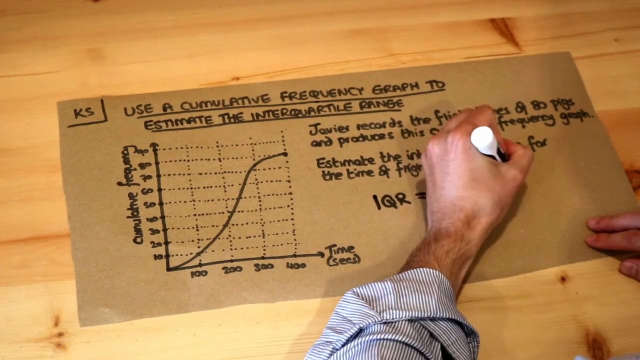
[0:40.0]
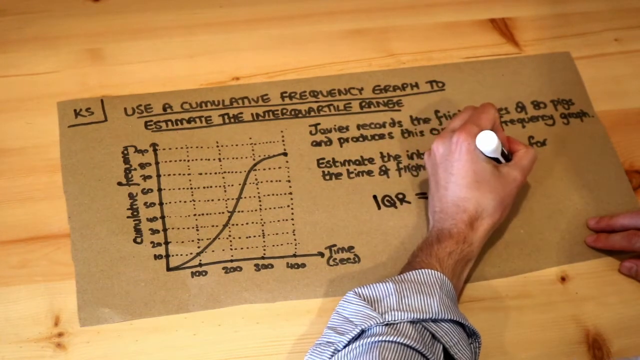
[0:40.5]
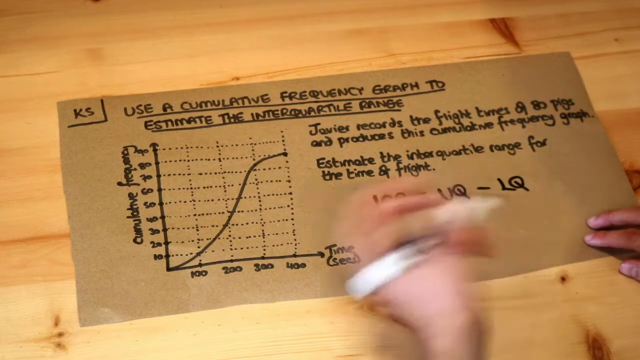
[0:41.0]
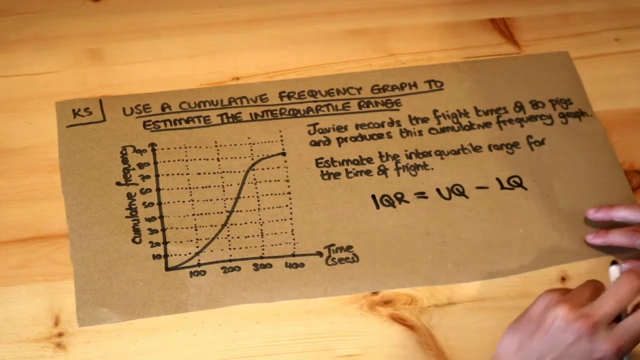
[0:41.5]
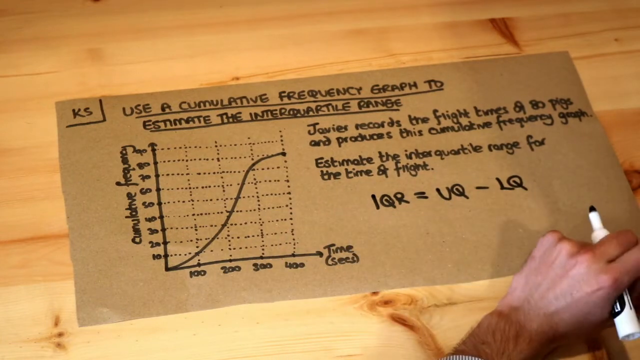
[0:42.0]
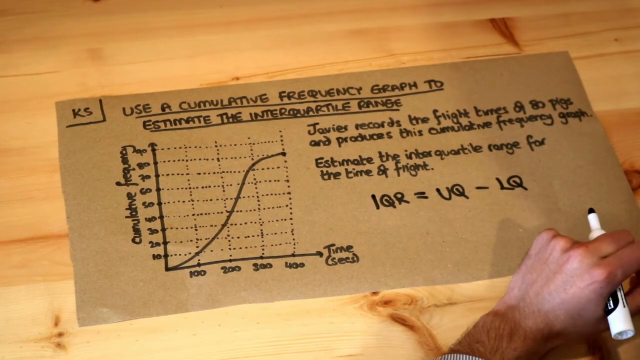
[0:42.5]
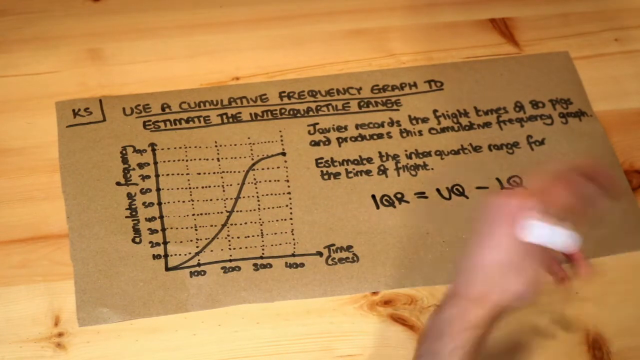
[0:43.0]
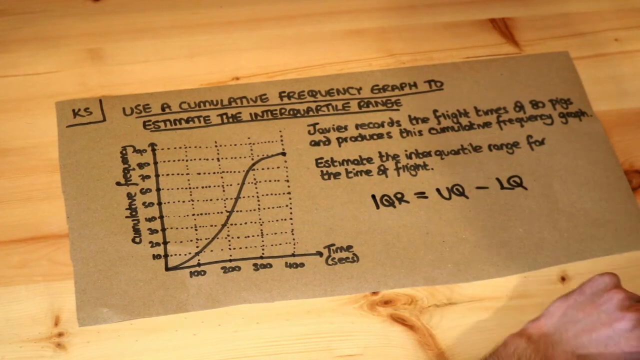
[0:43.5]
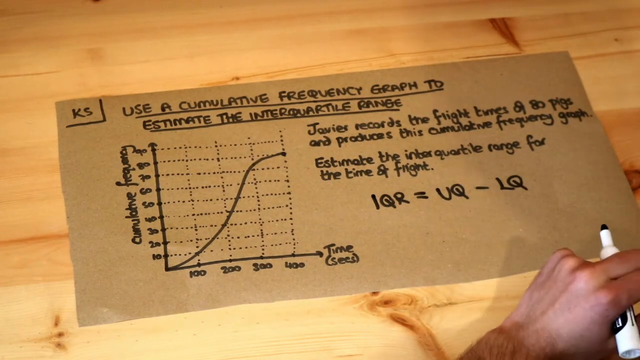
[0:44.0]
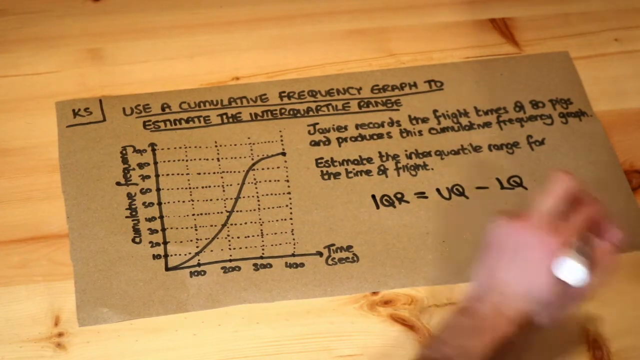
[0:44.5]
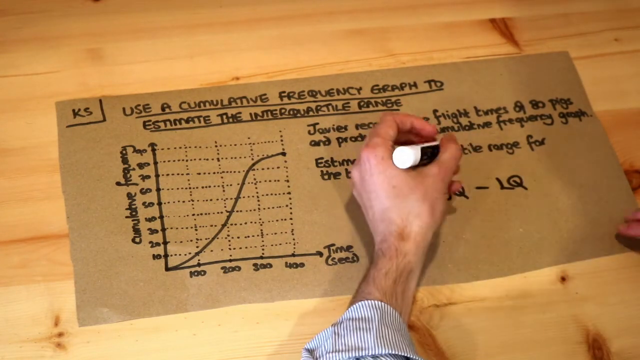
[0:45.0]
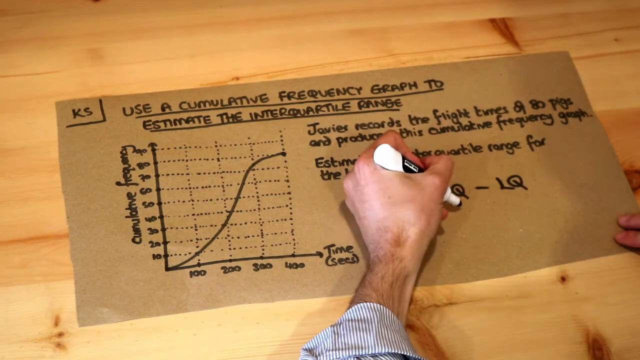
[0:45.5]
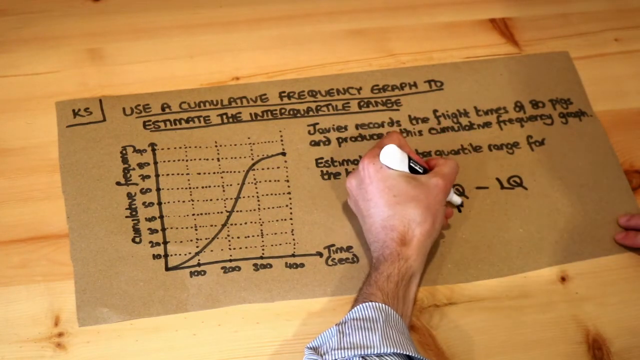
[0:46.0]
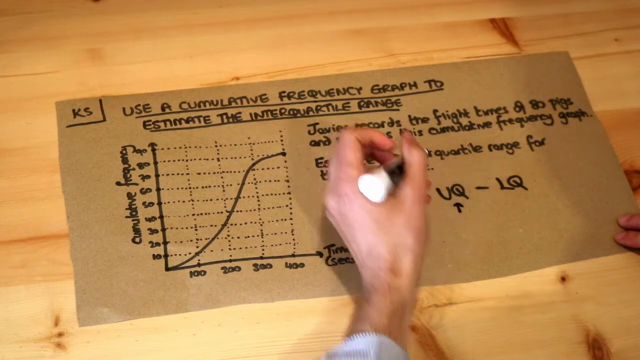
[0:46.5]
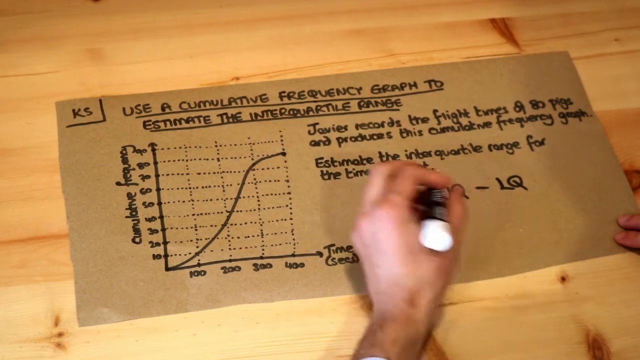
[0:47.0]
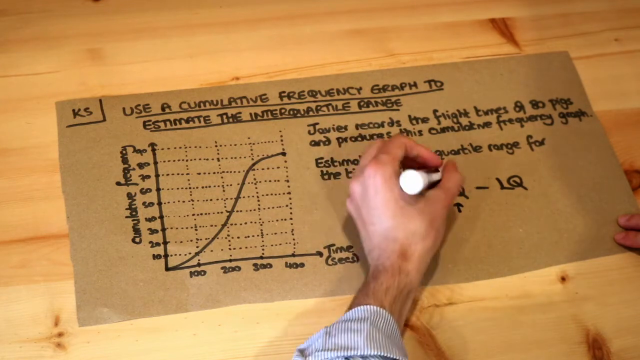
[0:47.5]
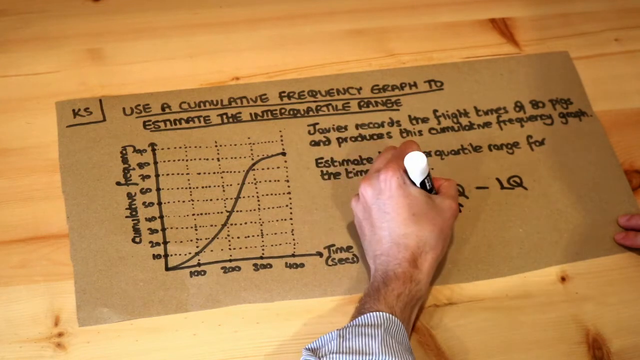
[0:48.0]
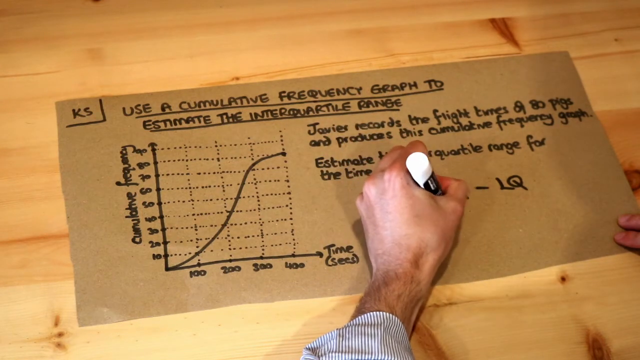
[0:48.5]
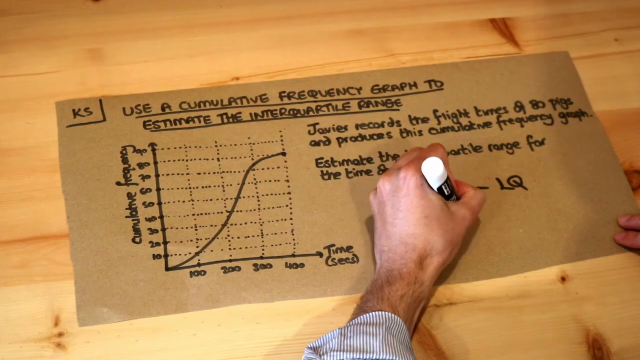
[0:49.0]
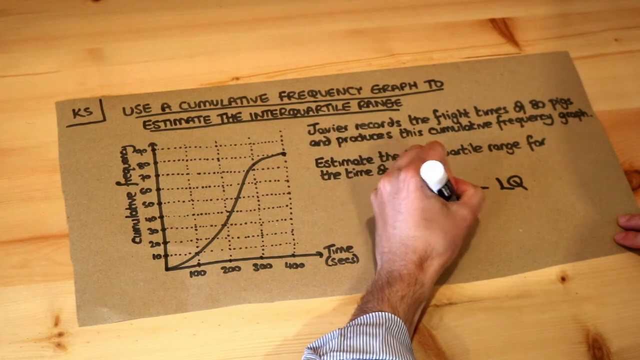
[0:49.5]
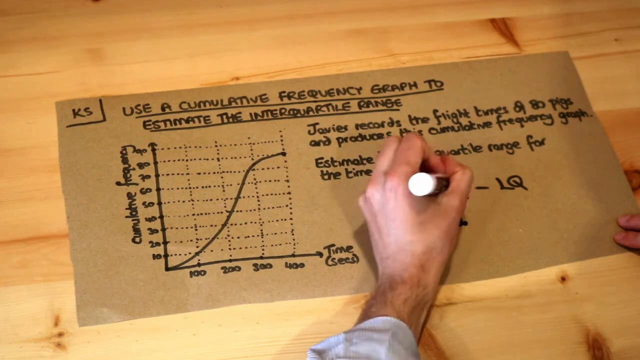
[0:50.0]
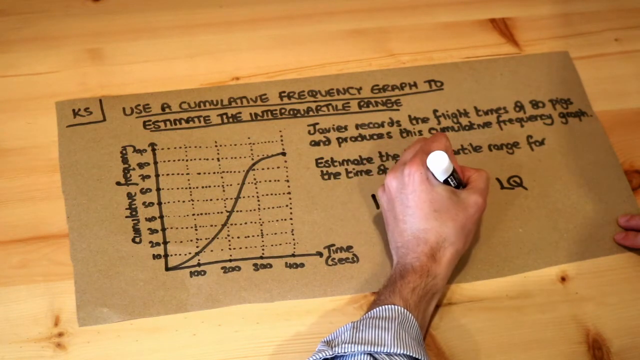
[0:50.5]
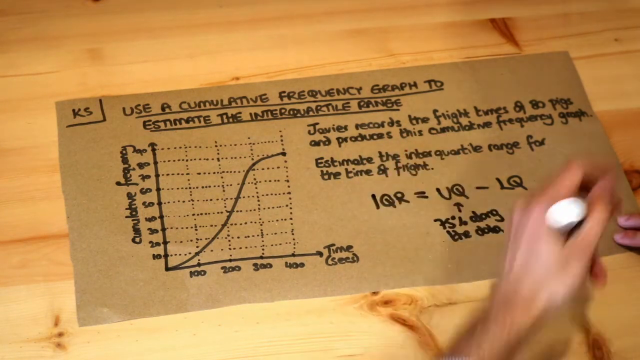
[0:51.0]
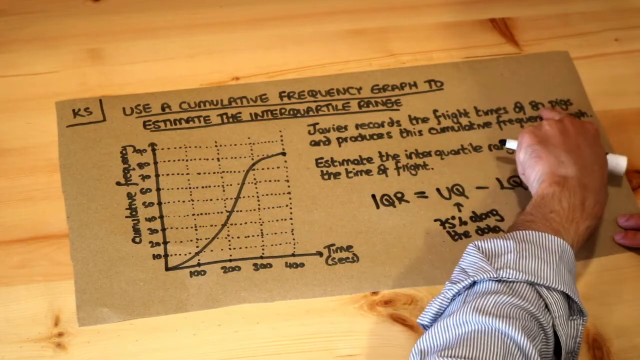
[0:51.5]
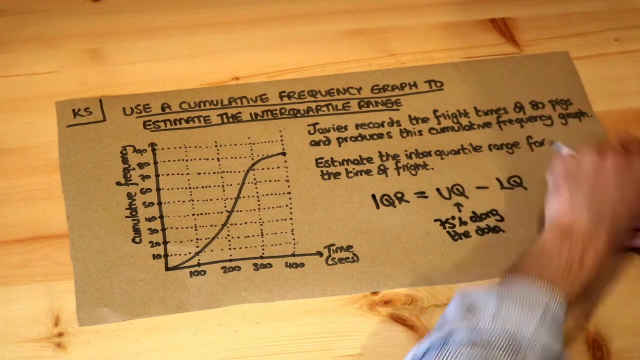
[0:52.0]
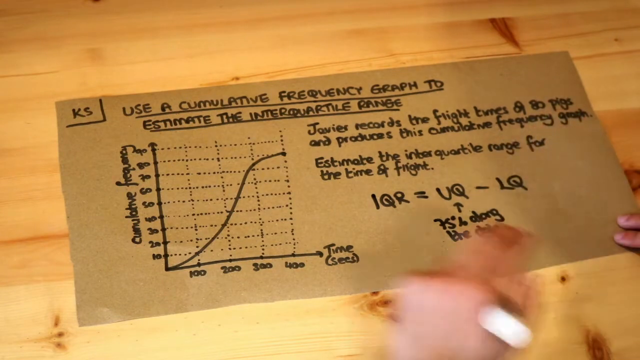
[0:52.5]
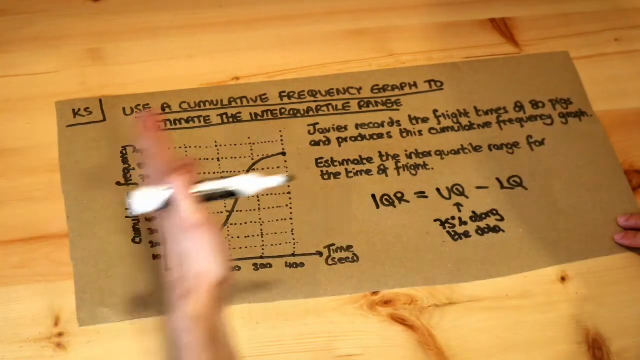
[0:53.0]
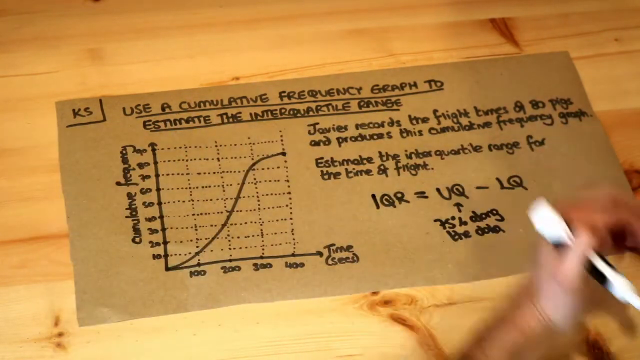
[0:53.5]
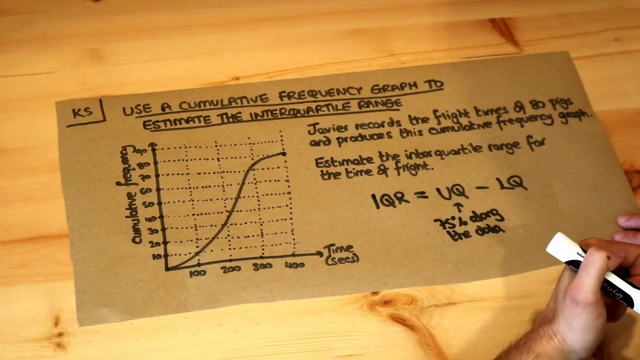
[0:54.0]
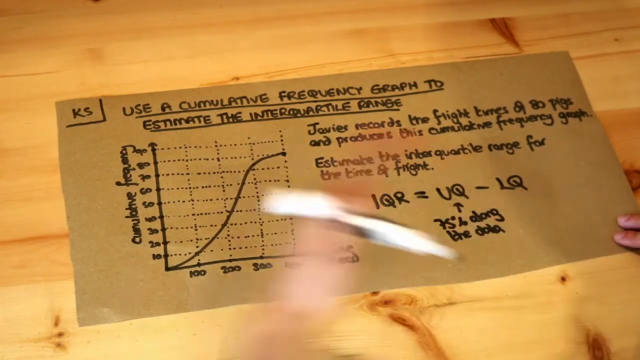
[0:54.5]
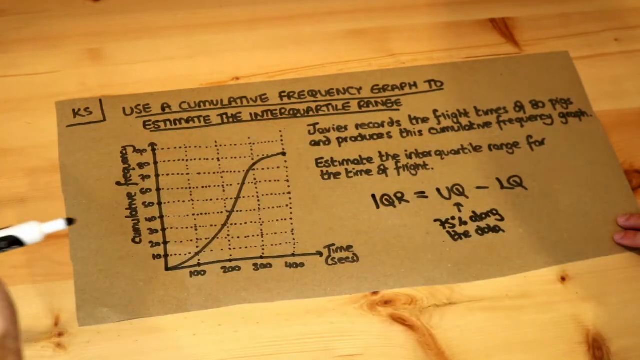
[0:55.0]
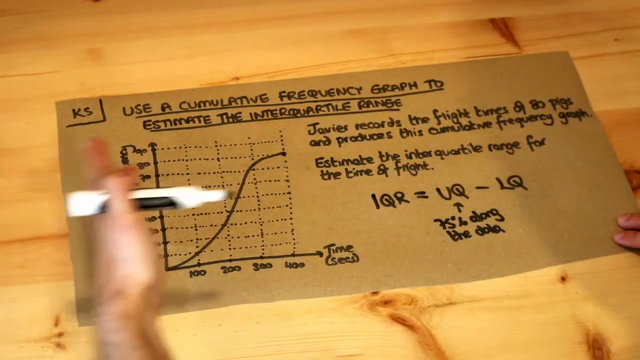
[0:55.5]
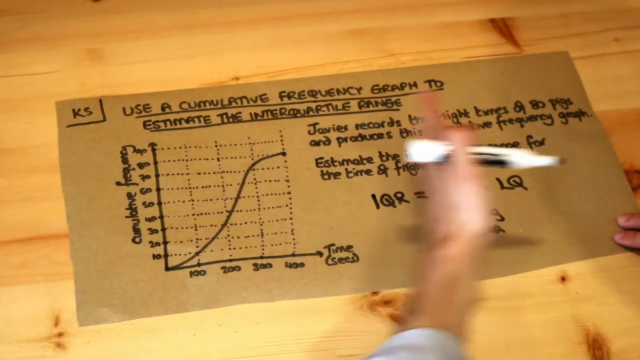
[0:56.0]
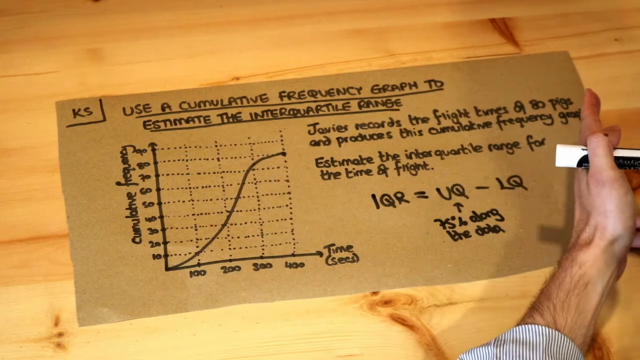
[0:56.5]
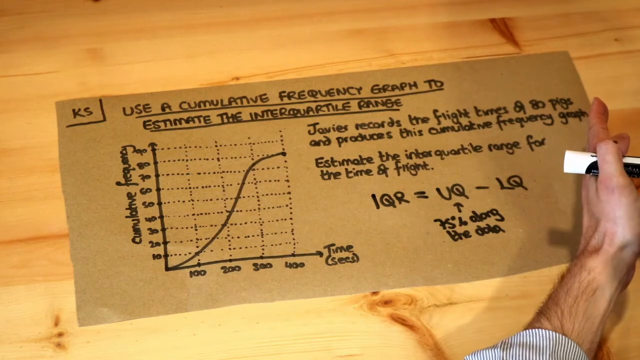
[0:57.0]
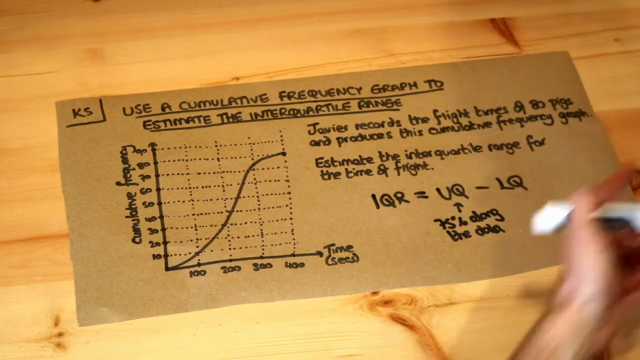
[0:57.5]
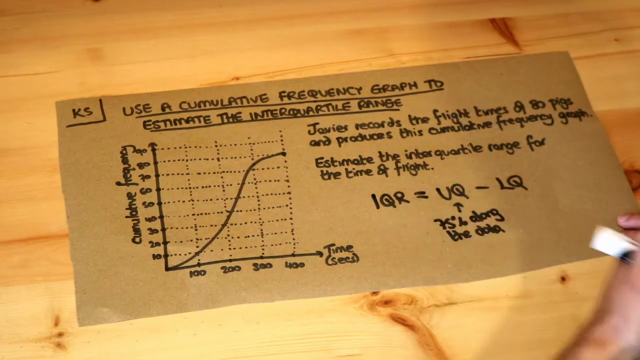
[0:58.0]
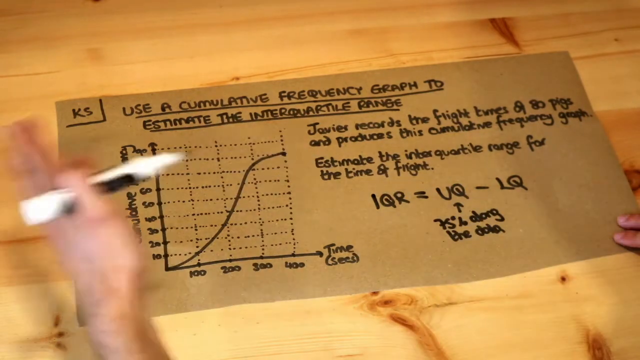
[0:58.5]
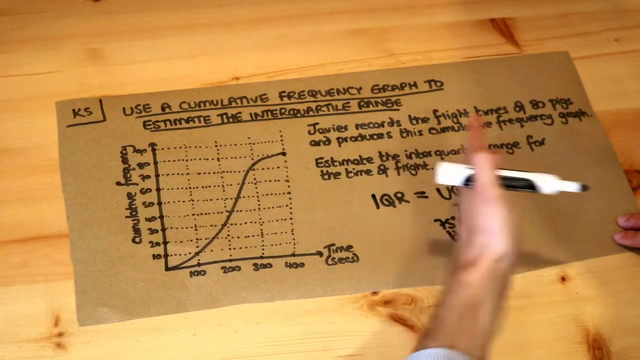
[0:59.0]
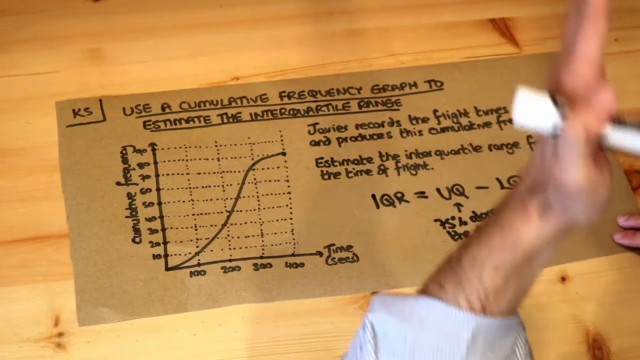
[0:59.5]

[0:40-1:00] A man is writing information by hand on a piece of cardboard with a black magic marker. He has drawn a graph with time on the bottom and cumulative frequency on the left side; the curve goes up as it moves to the right. At the top it says "use a cumulative frequency graph to estimate the interquartile range." He has written two sentences about the graph and continues by writing the equation "1qr equals uq minus lq." He draws an arrow pointing up to the middle and writes "75 percent," followed by hard-to-read words, something about data. He is constantly moving his hand, and mainly only his left hand is visible. The cardboard is on a wooden surface that looks very light in colour. He holds down the lower right corner with his right hand; the whole hand is not visible, but his fingertips are seen holding the cardboard down.